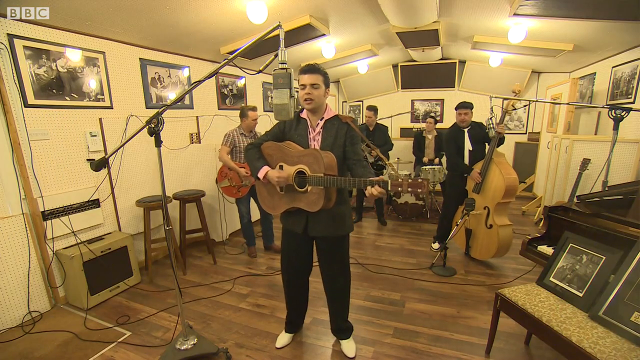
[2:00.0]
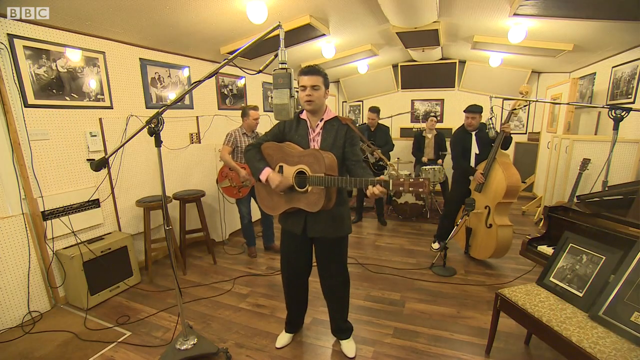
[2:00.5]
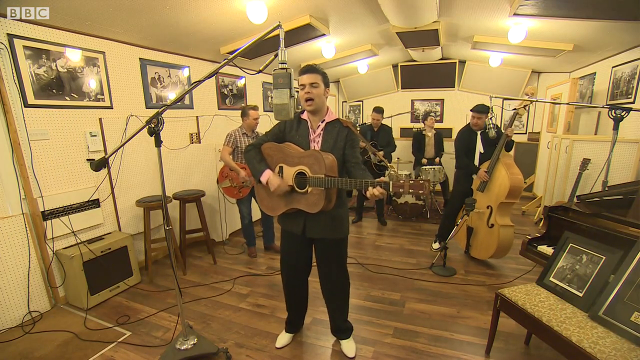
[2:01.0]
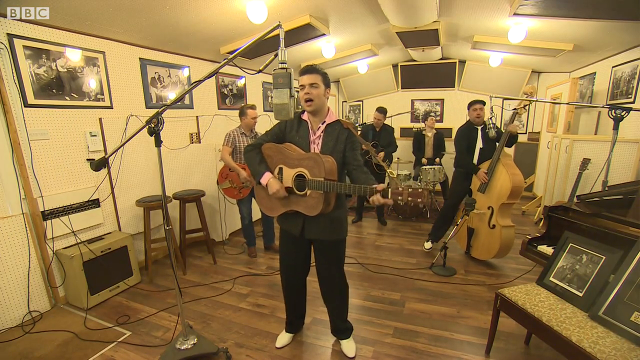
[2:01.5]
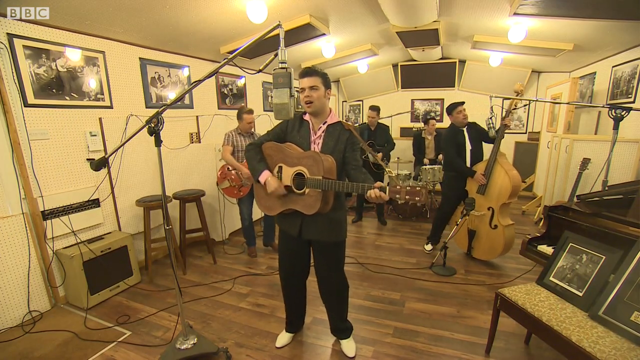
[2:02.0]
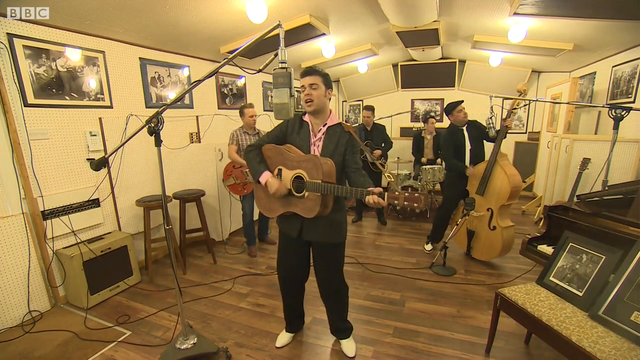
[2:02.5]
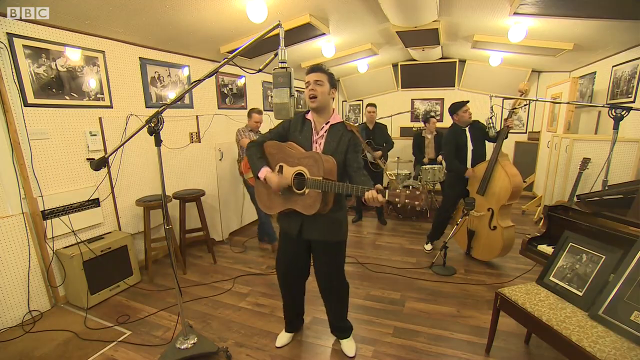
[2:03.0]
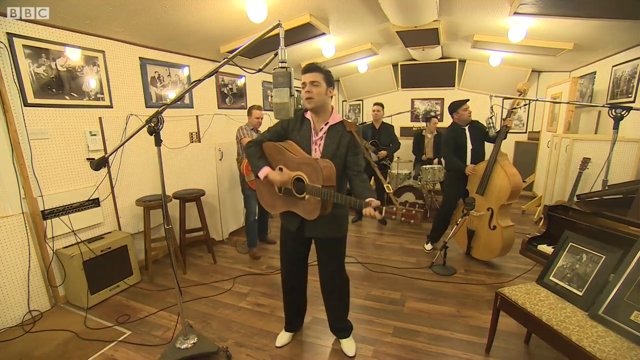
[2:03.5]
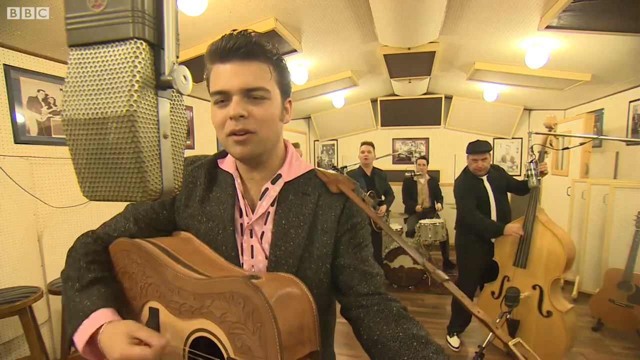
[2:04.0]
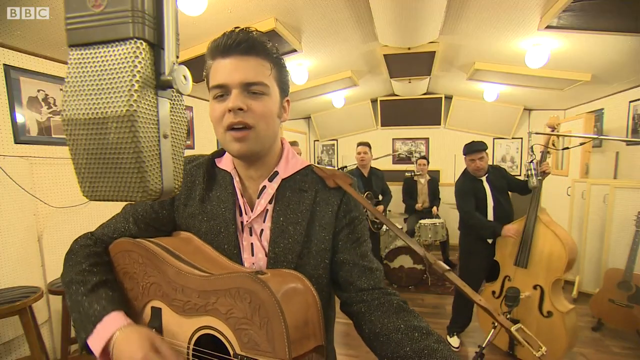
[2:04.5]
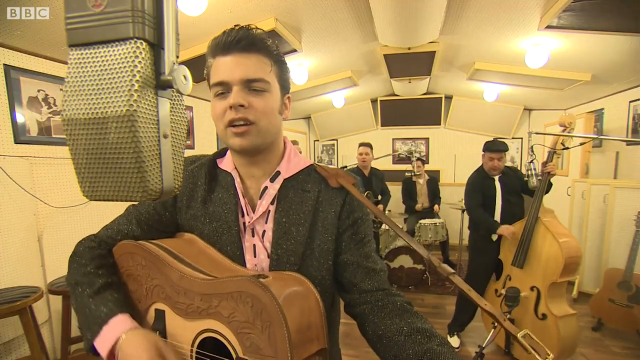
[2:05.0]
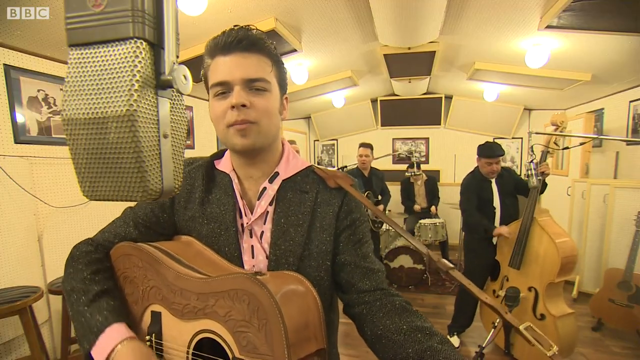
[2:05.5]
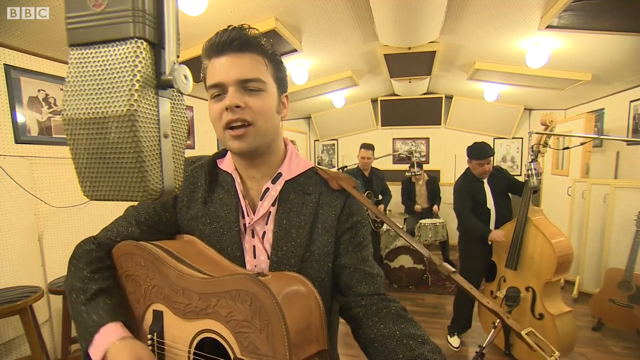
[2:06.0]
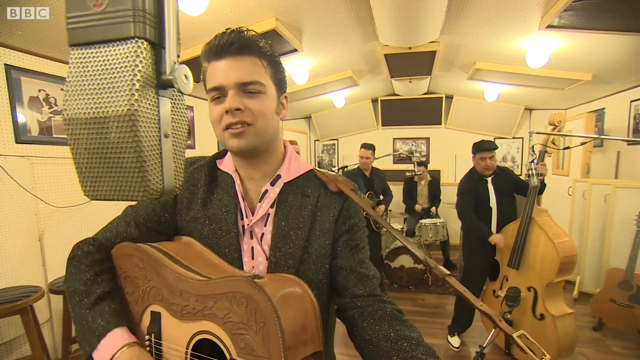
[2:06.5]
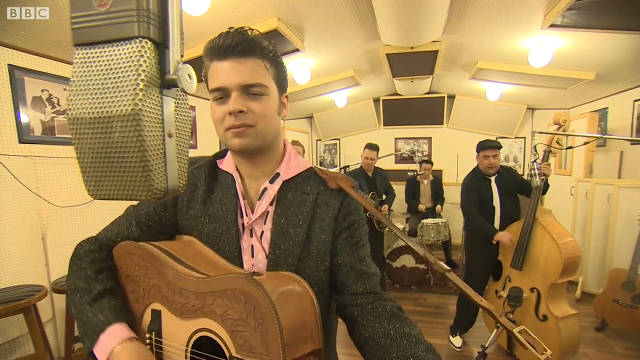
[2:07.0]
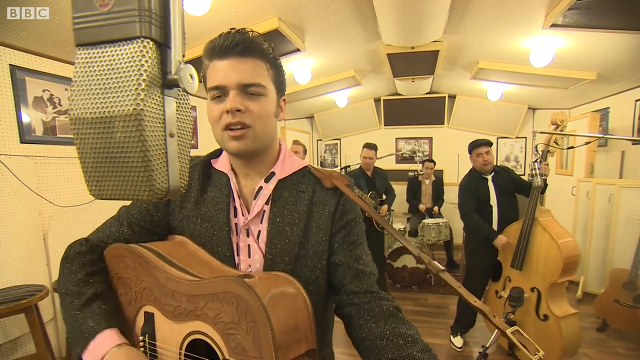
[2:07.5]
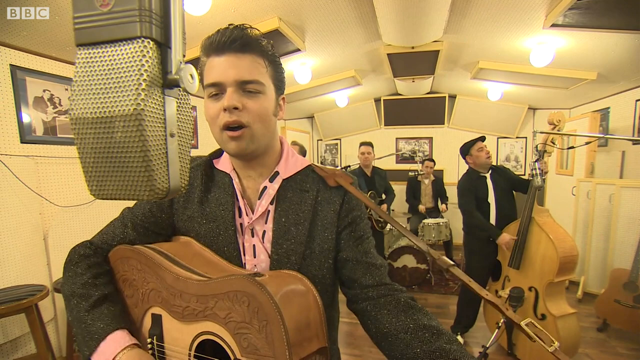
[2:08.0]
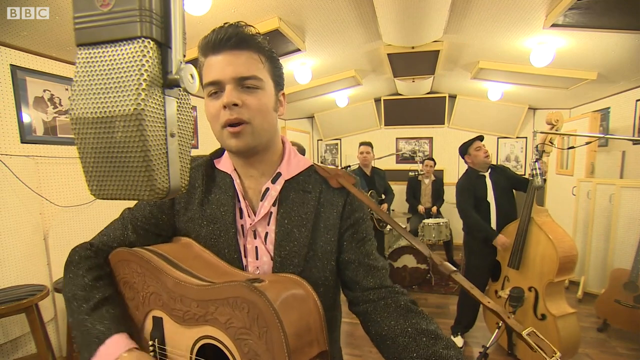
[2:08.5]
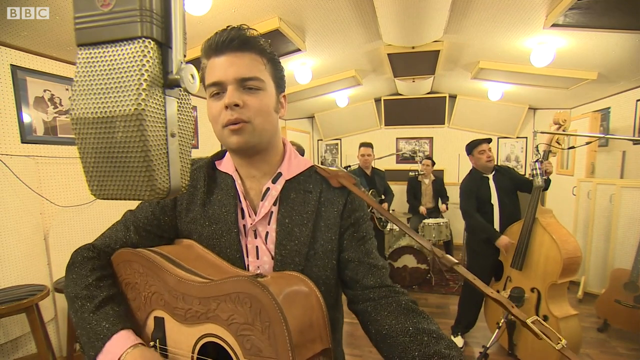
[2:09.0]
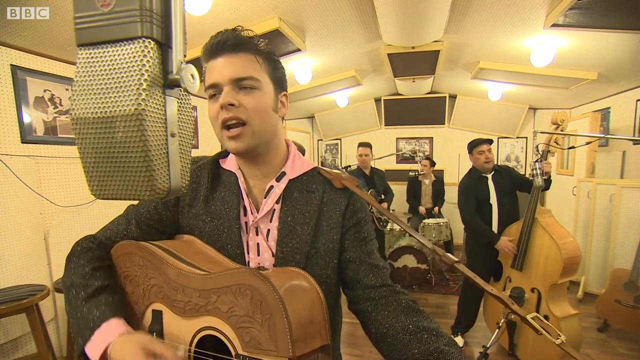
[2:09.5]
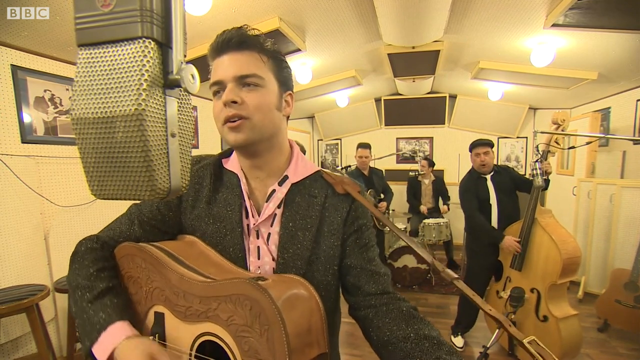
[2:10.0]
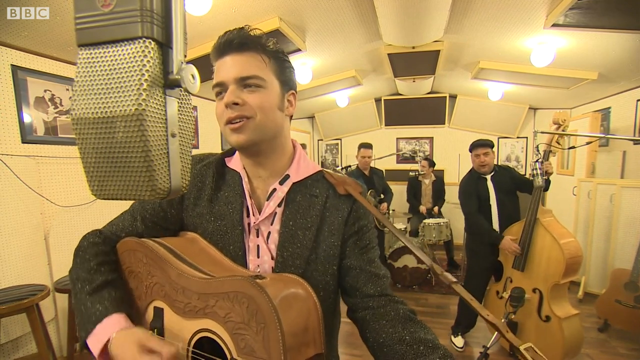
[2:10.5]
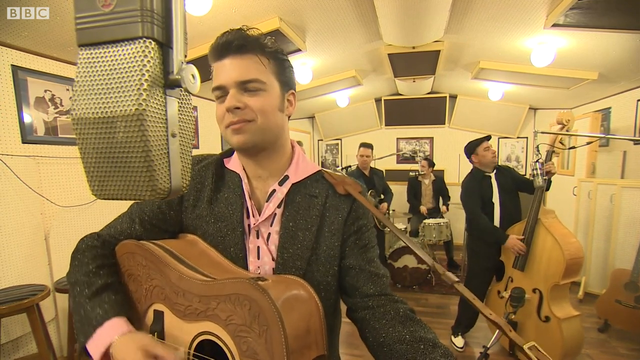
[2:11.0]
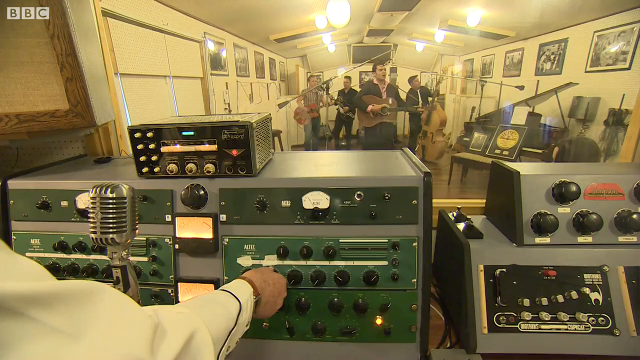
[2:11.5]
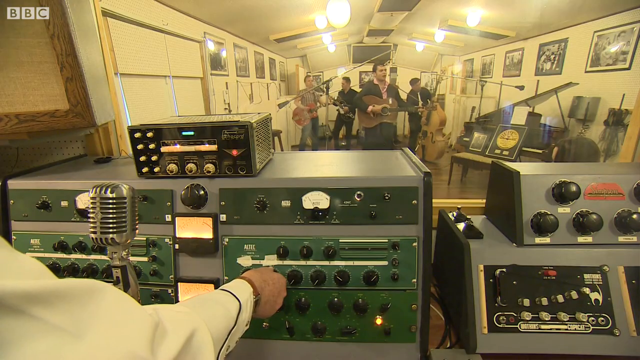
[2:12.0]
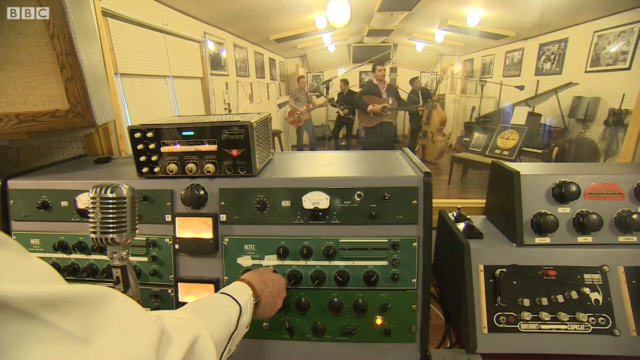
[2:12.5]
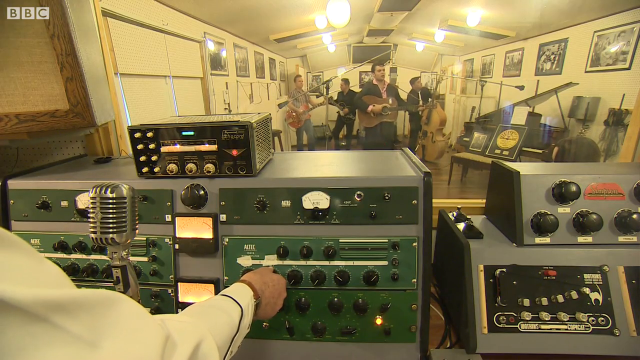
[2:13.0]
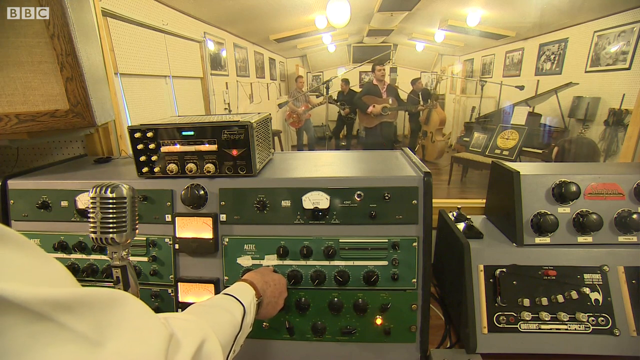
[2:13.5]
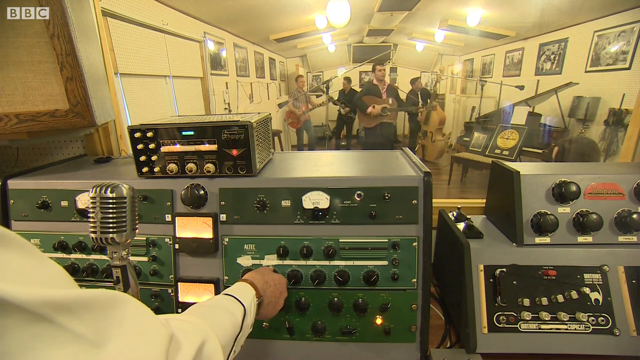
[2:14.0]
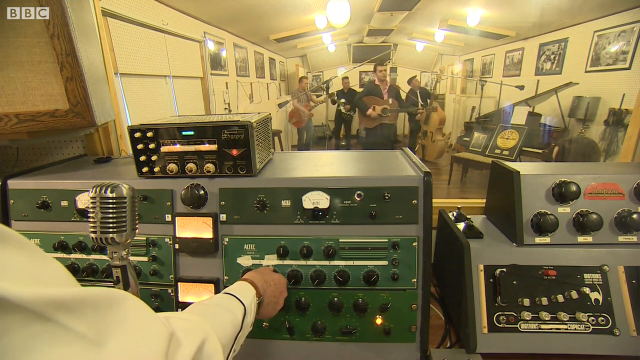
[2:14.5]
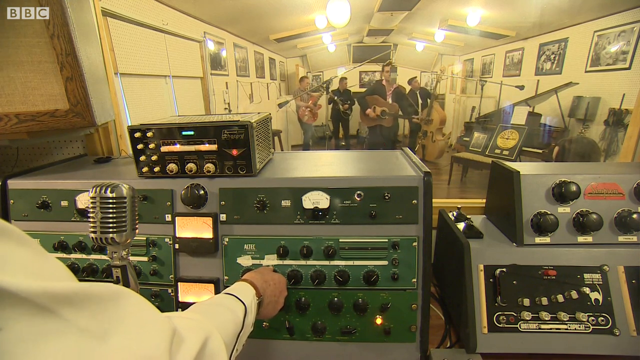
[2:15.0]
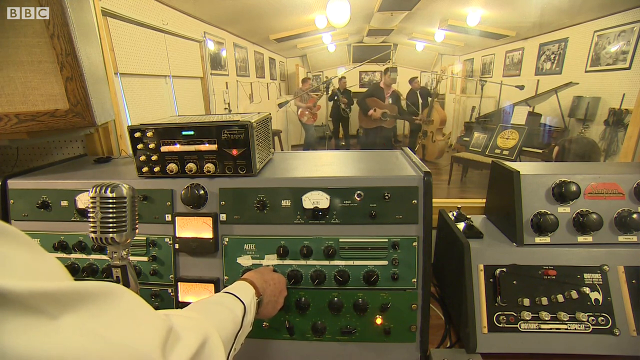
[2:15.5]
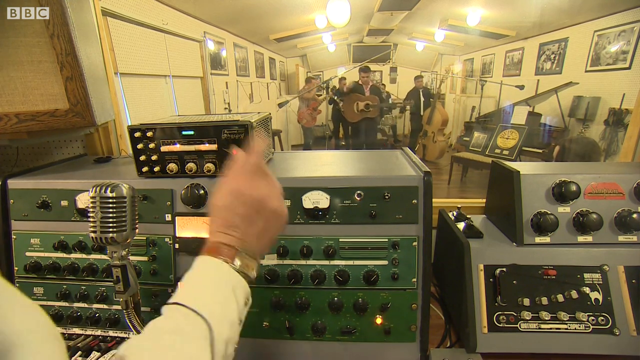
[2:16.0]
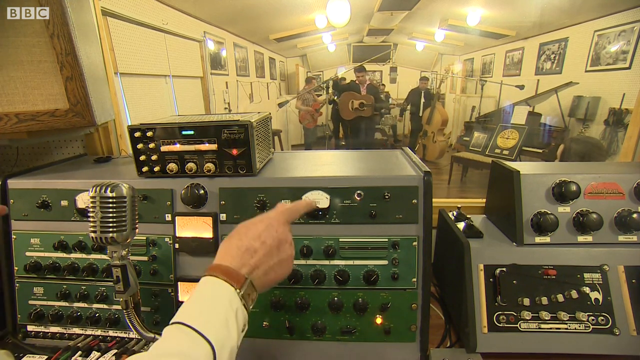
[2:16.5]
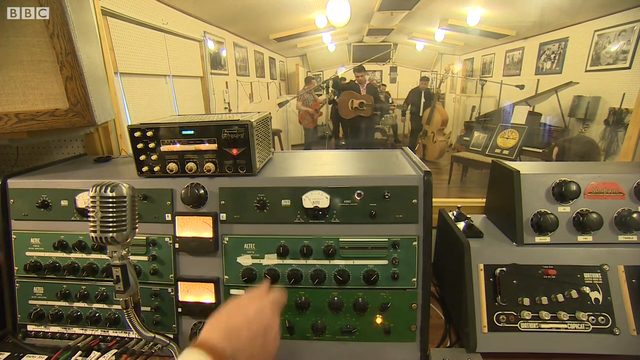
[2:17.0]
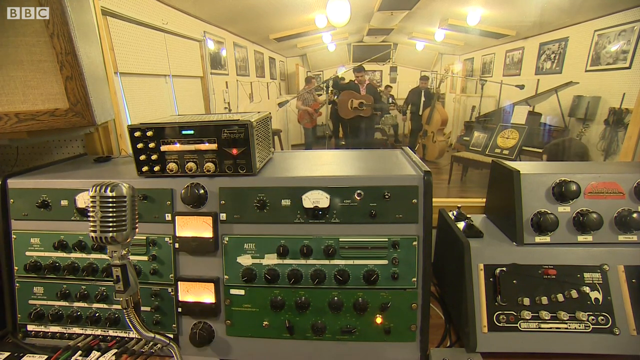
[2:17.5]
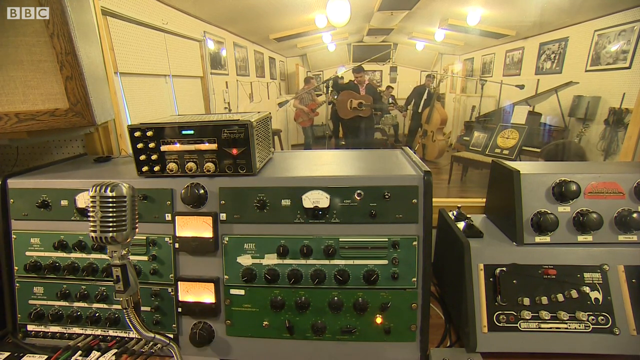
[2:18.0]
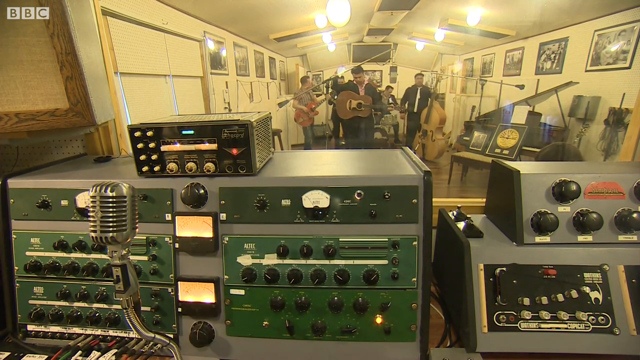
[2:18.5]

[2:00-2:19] A band plays inside a studio. In front, a man stands at a microphone singing, his hand moving up and down as he strums a guitar. Behind him, others play their instruments, including a stand-up bass, and in the very back a drummer plays a drum kit. Everyone is kind of bouncing around as they groove to the music. The scene then changes to the recording room at the far end of the studio, where a person stands behind the recording equipment, manipulating the knobs. At one point he kind of lifts his hand and points toward the equipment as if making a gesture.